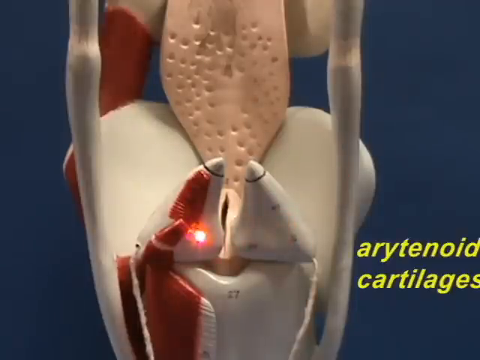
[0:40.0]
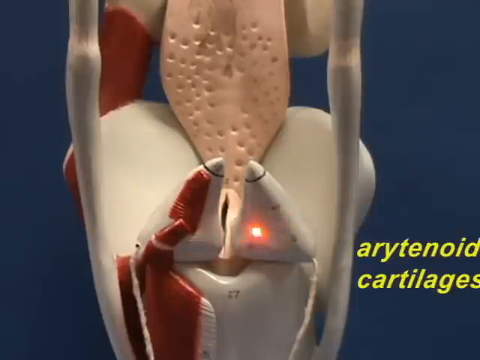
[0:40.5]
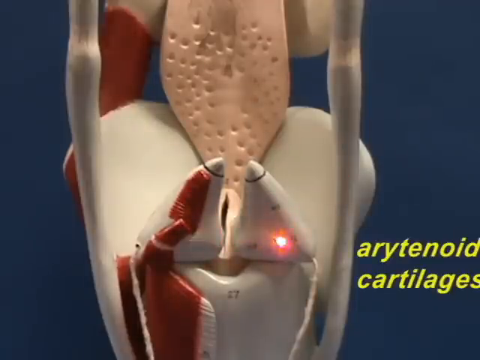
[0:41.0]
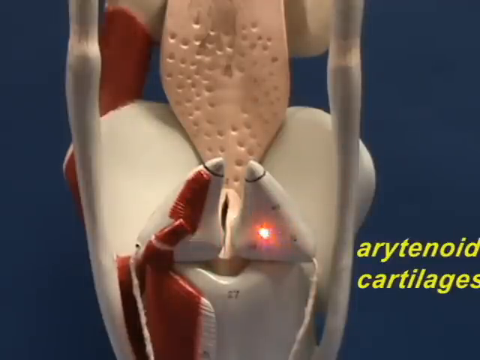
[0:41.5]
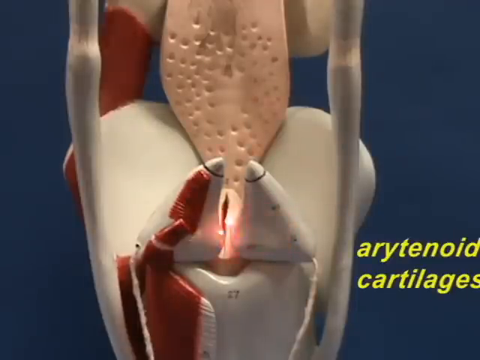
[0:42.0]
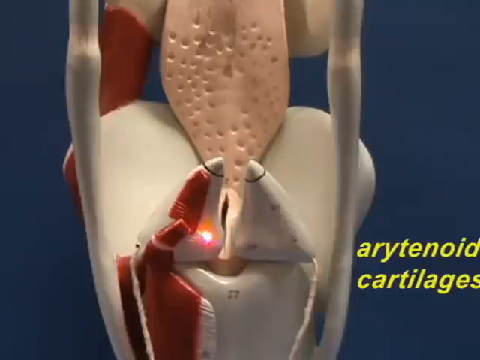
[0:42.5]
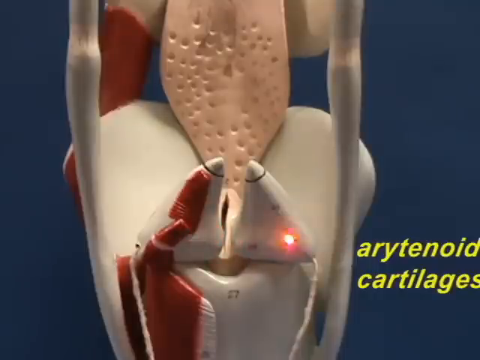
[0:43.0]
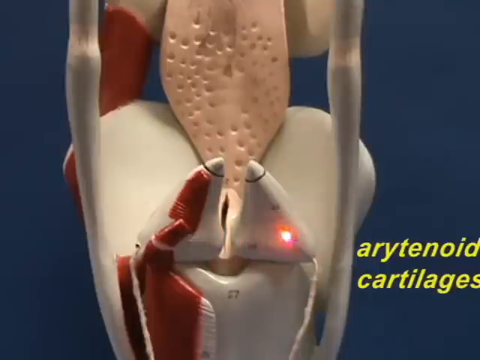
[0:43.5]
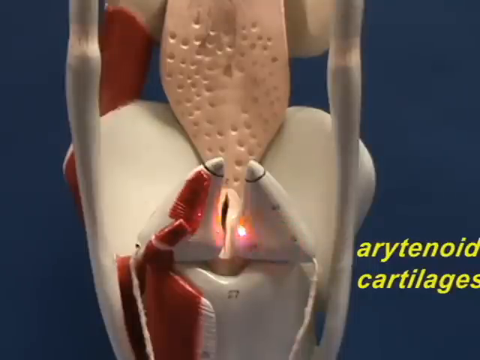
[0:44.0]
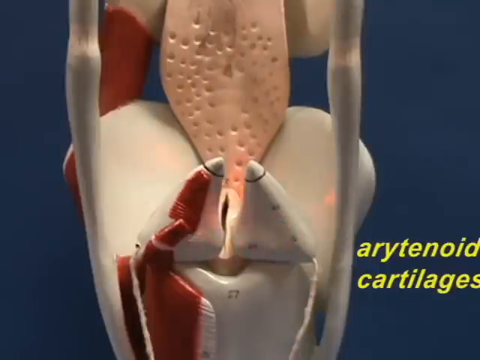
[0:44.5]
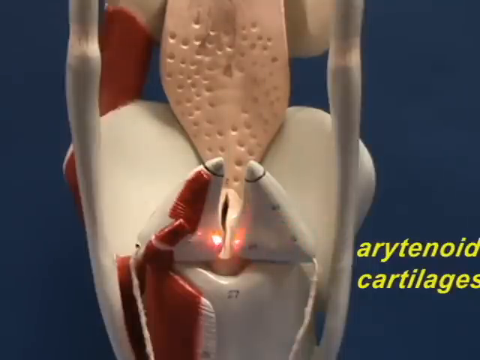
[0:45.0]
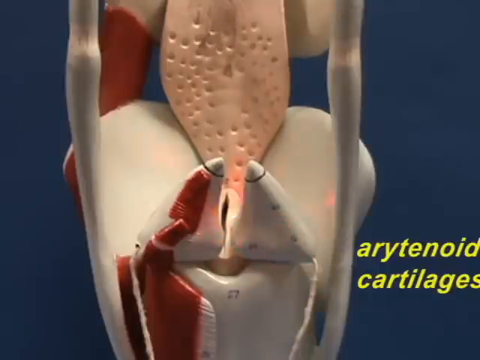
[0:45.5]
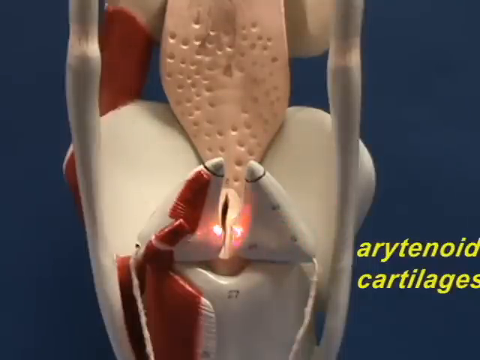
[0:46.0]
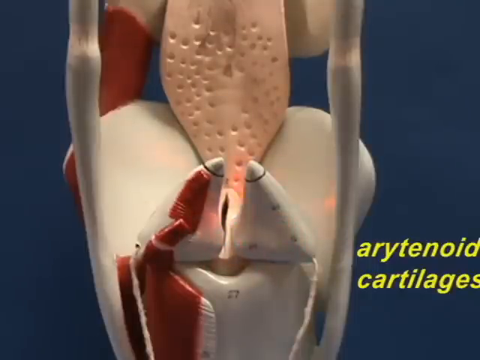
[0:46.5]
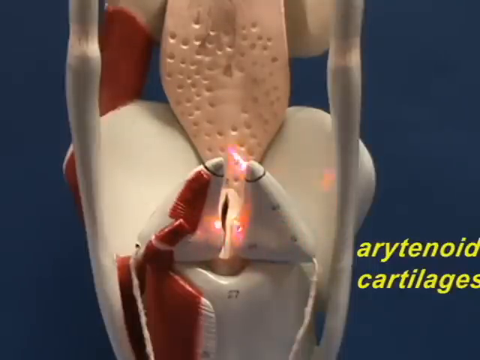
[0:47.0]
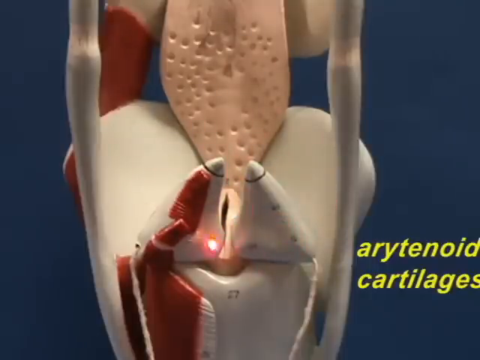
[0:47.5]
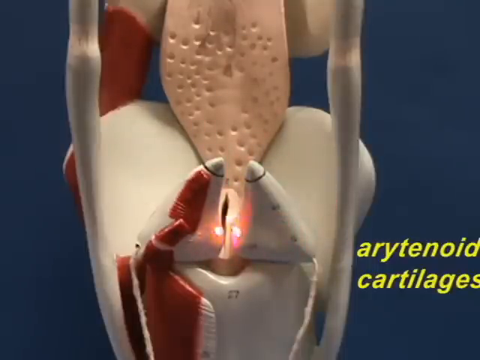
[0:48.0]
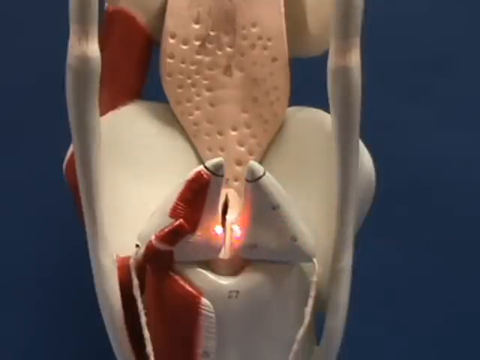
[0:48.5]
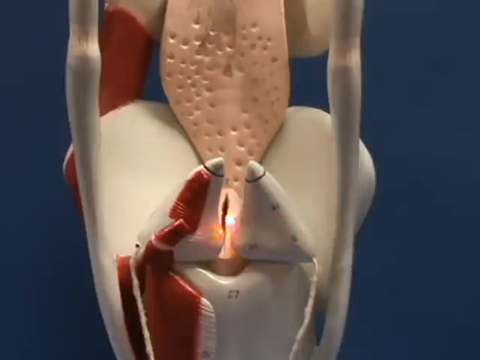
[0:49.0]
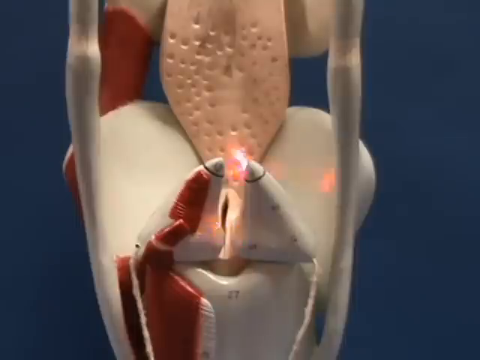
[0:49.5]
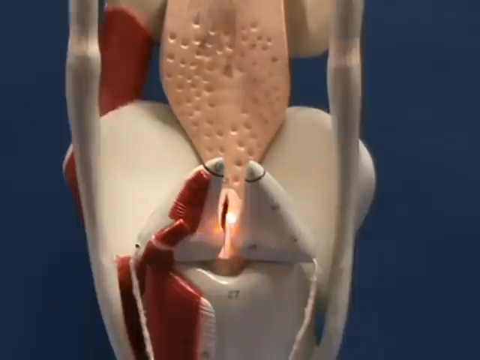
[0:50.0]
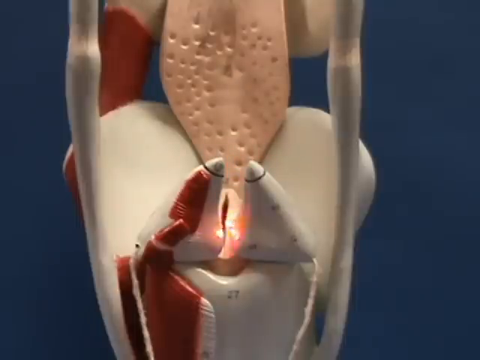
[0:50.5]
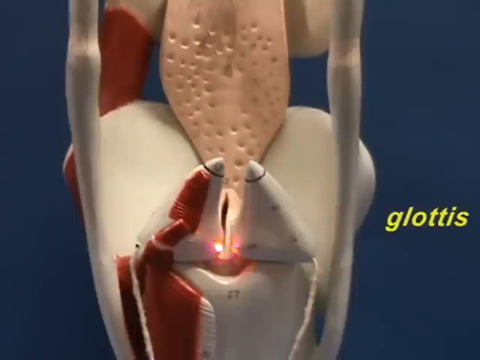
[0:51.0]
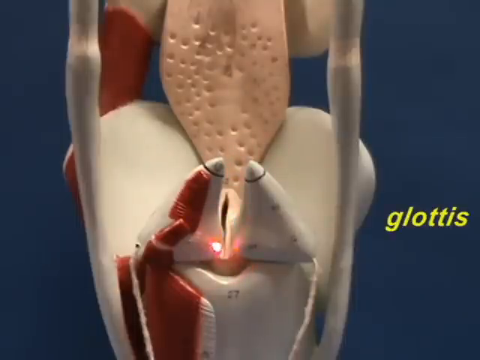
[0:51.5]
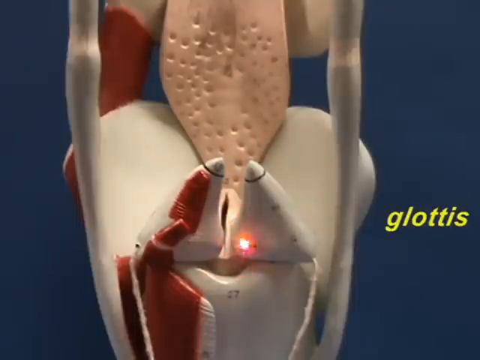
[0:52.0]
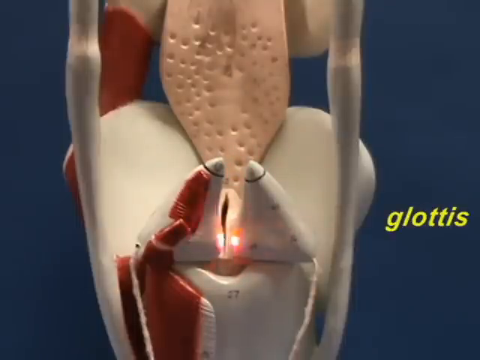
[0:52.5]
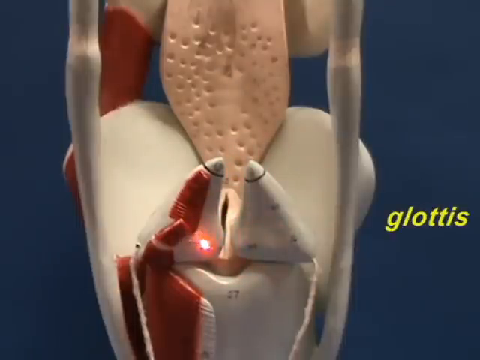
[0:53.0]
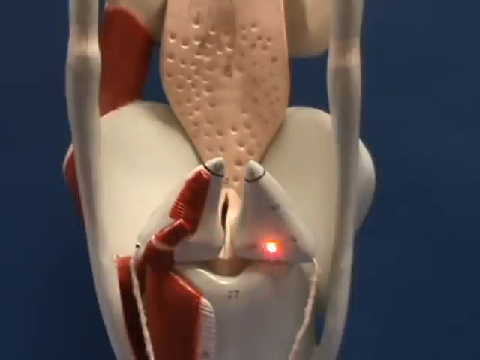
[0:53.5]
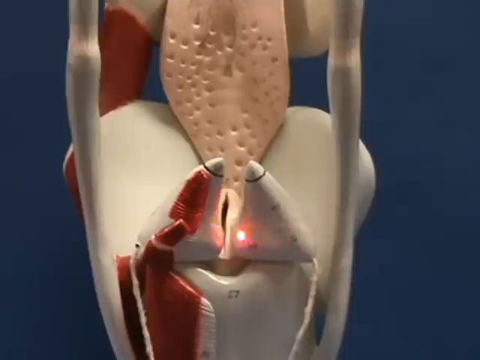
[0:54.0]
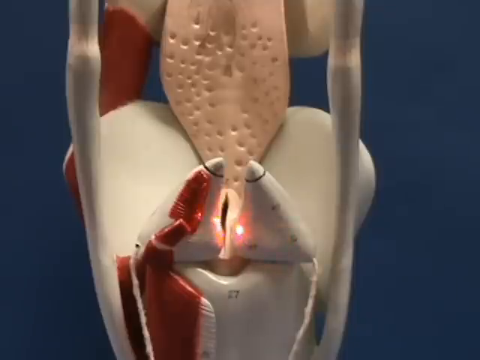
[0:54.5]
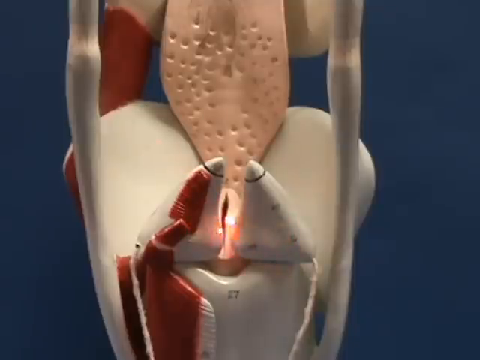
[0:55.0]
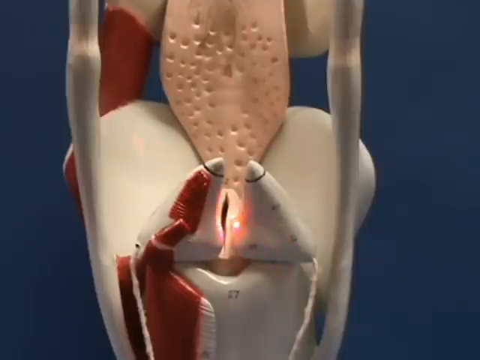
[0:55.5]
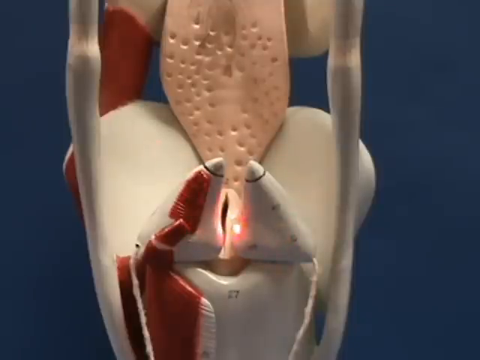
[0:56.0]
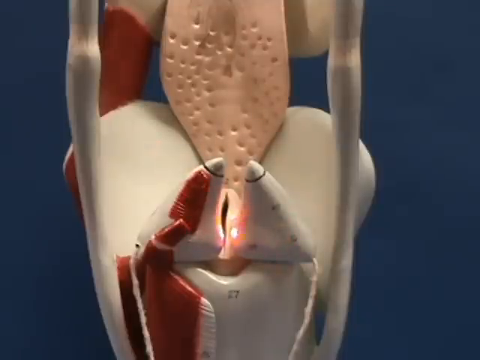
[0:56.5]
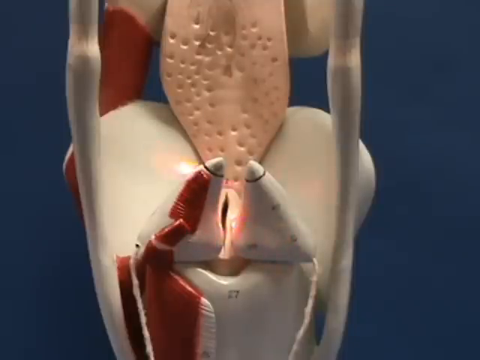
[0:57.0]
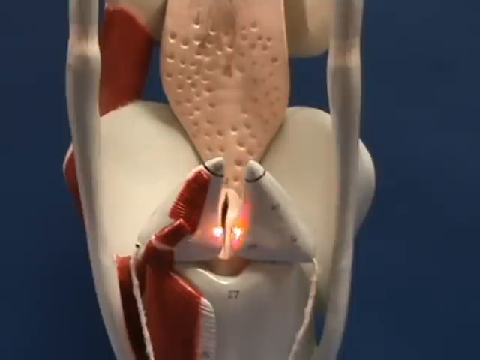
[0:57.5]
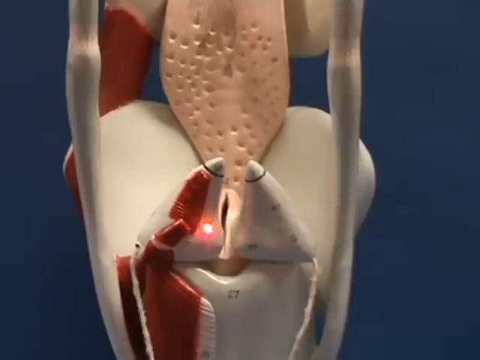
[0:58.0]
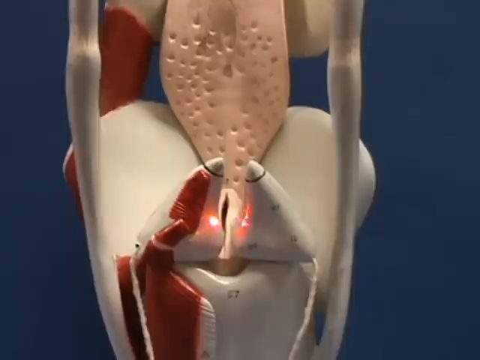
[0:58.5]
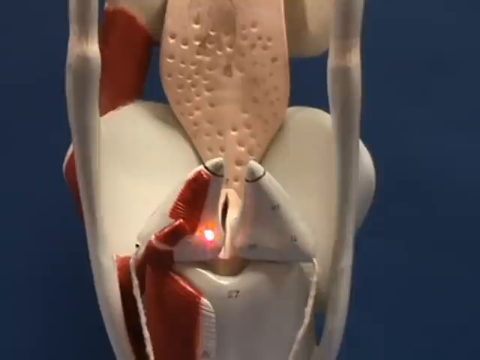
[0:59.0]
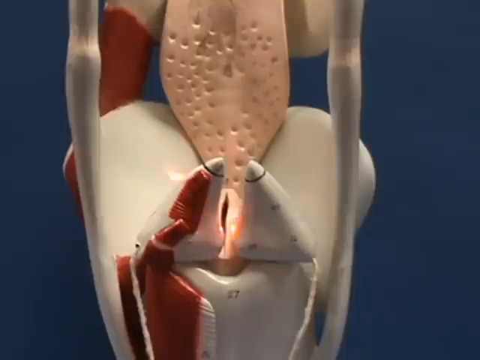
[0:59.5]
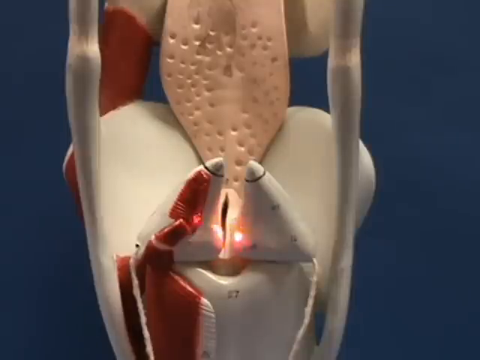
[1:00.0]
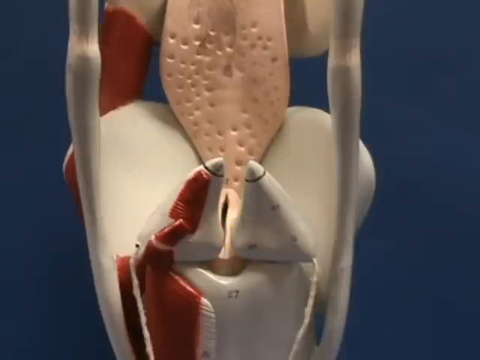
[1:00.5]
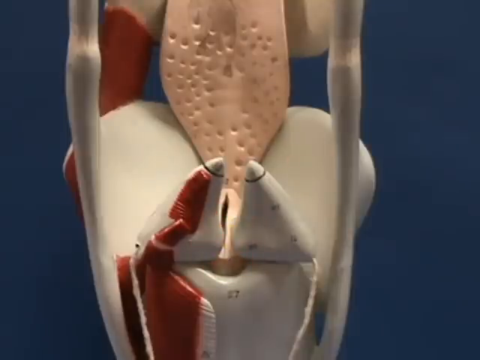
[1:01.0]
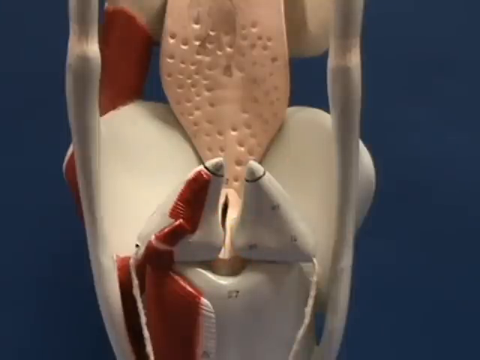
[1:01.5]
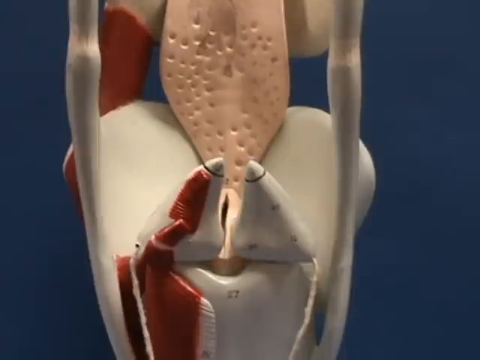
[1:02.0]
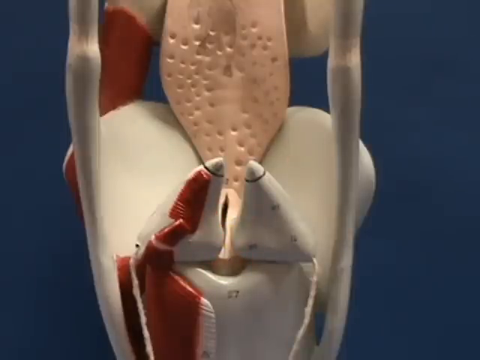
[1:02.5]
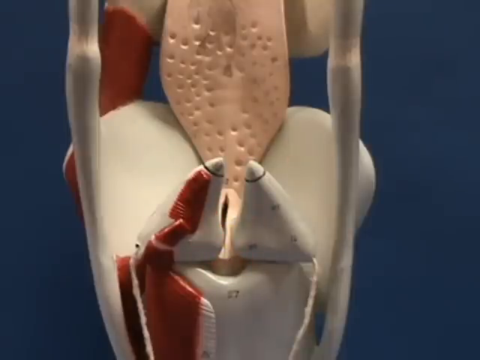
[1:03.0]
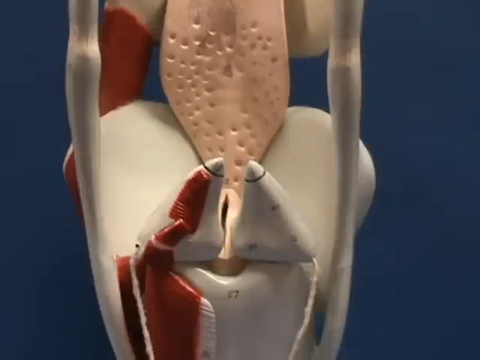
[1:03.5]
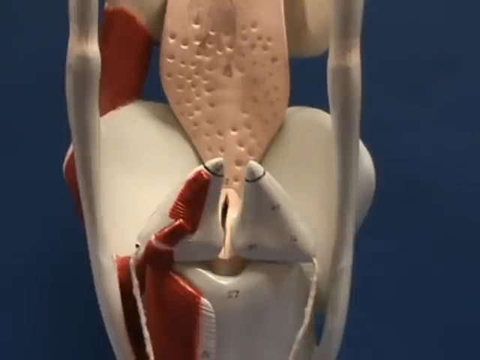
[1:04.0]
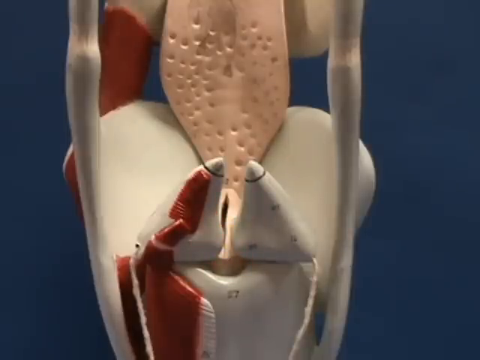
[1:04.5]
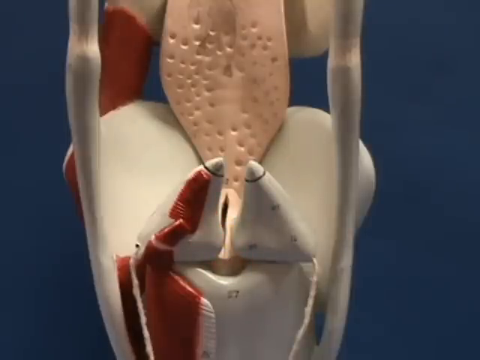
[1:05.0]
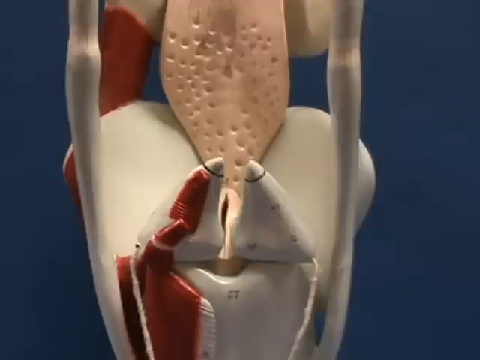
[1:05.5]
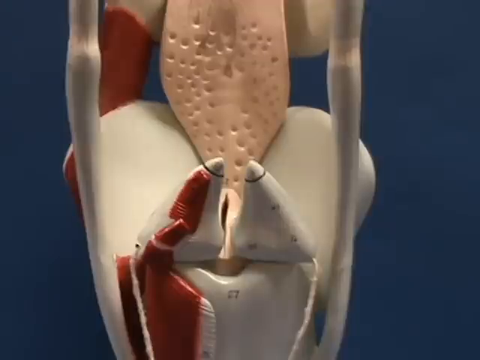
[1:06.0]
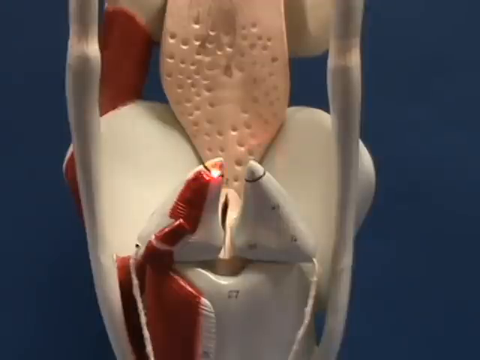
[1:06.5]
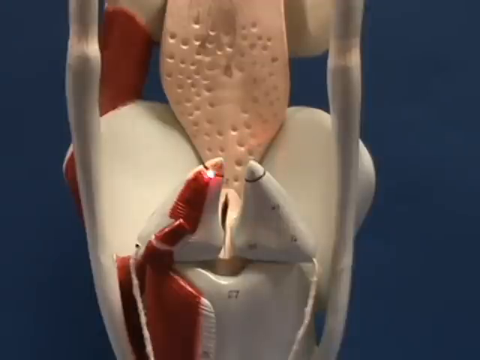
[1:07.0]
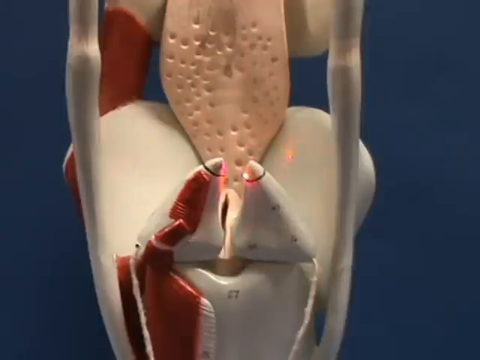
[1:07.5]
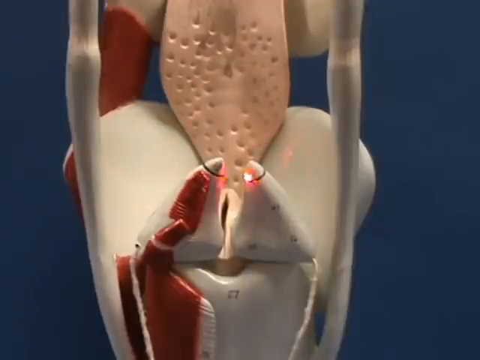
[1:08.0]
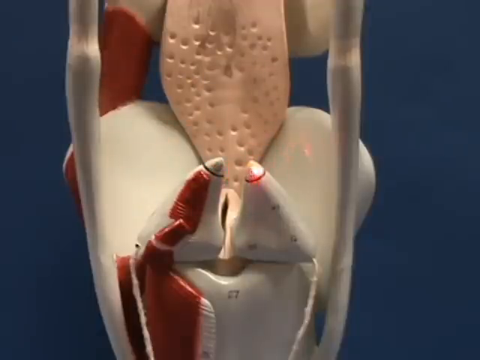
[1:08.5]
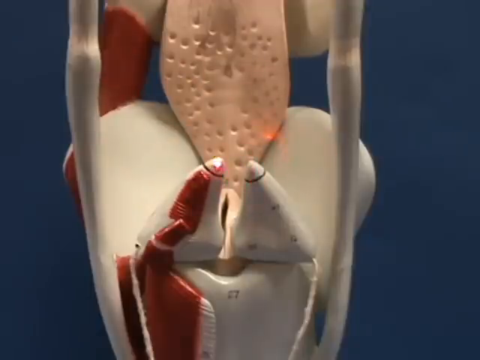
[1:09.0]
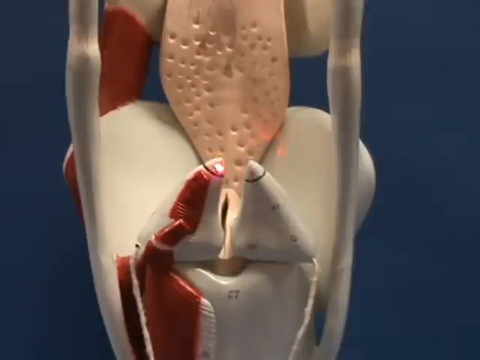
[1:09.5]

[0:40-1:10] Against a dark blue background is a model of a larynx showing two bones and a couple of things attached to the larynx. Someone standing off screen with a laser pointer points to different parts of the model. He points to a part in the middle of the model, a white, spiky-looking piece with dark red painted down its side, and the words "Arytenoid Cartilages" pop up to the right. There are two of these pieces, one on the left and one on the right; the right one is solid white, while the left one is white with a dark red strip running from its very tip downward. The person then puts the laser pointer right between those two pieces on another part of the model, and the word "GLOTTIS" appears in green on the right side of the model.